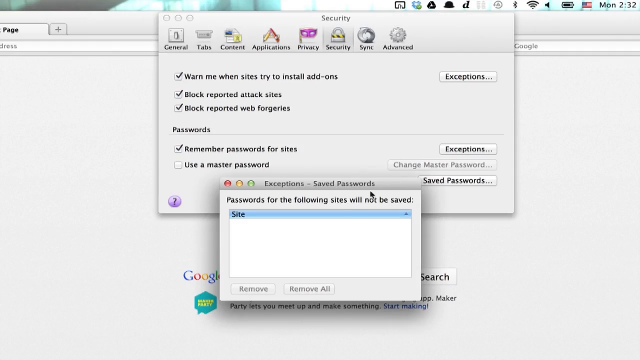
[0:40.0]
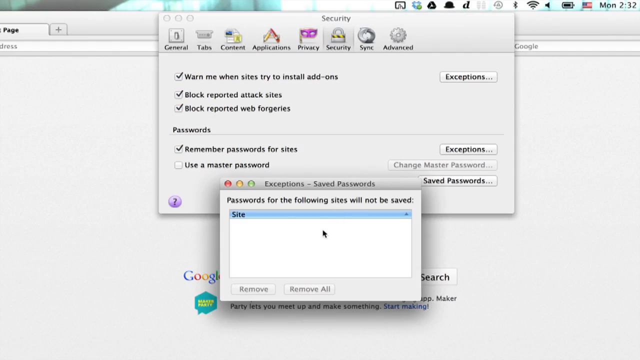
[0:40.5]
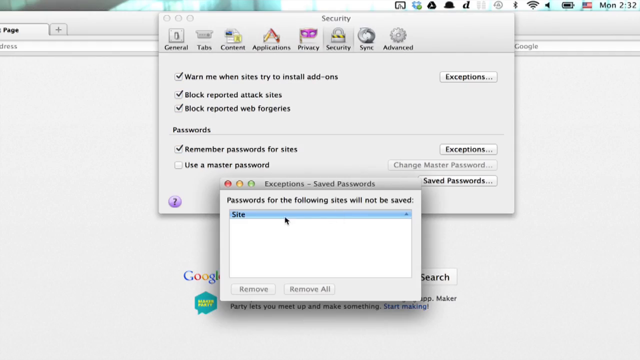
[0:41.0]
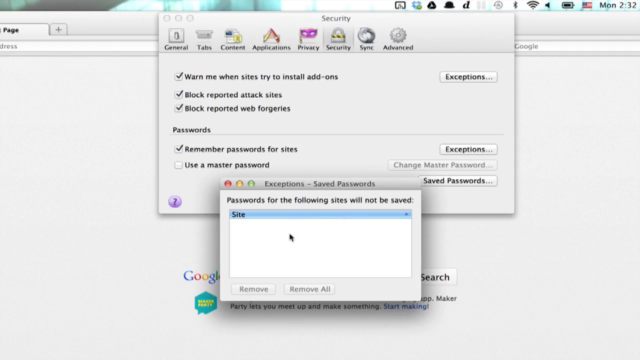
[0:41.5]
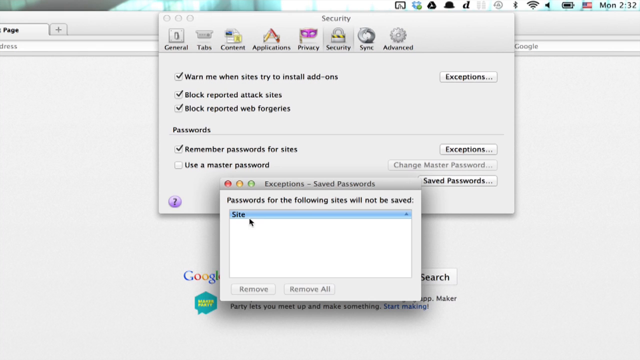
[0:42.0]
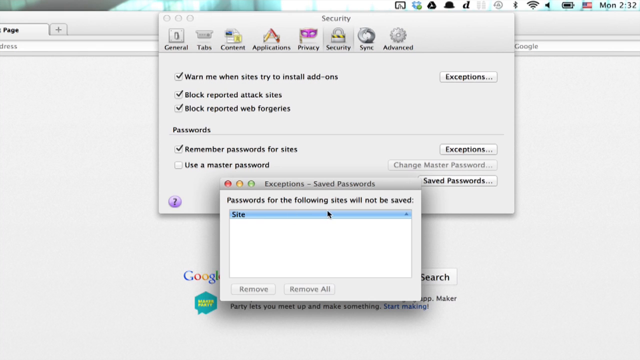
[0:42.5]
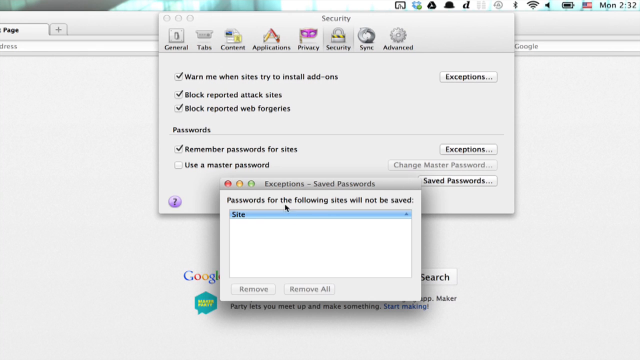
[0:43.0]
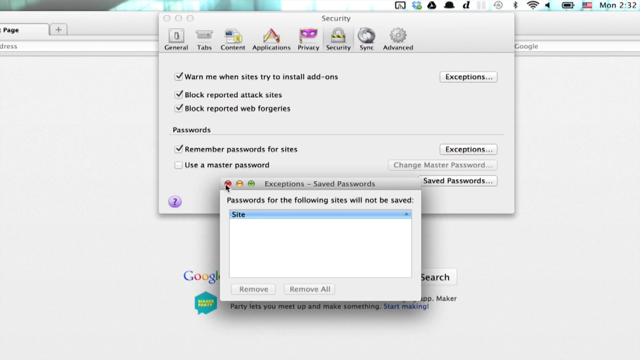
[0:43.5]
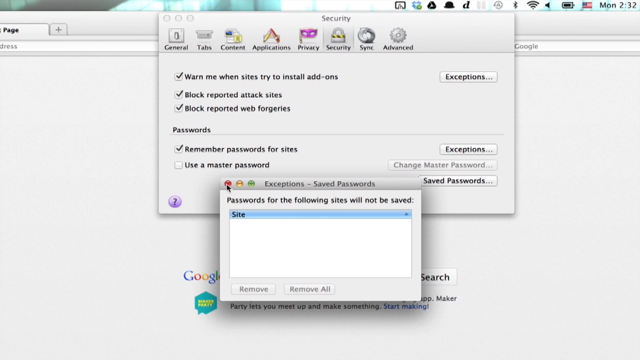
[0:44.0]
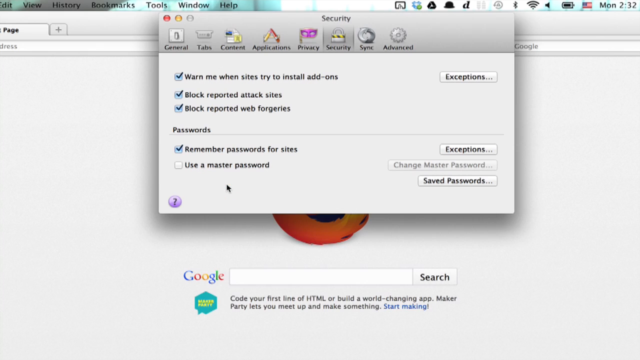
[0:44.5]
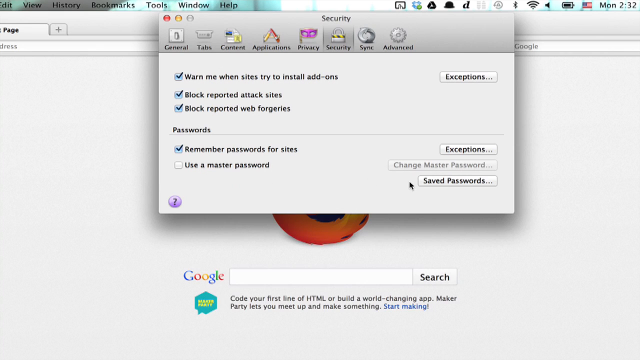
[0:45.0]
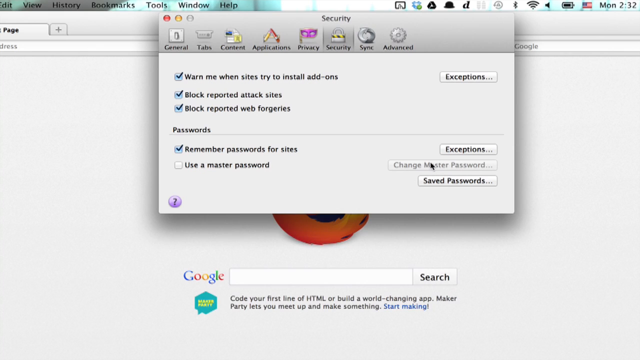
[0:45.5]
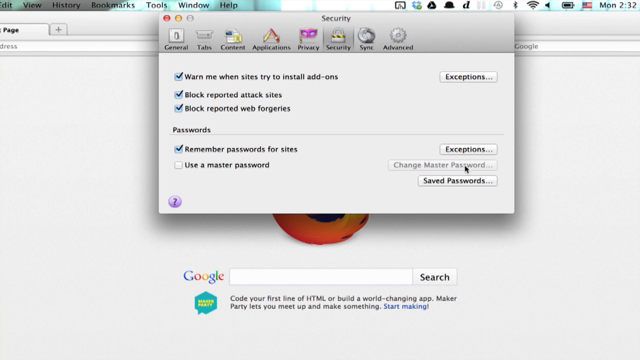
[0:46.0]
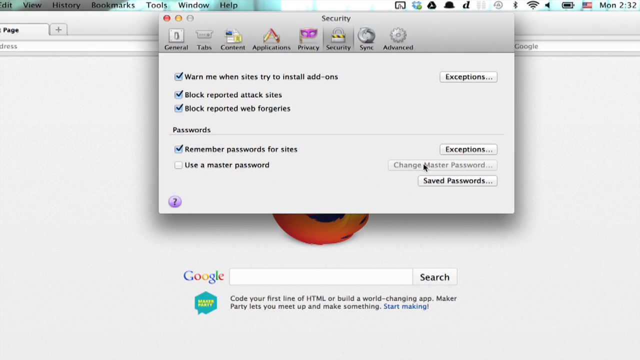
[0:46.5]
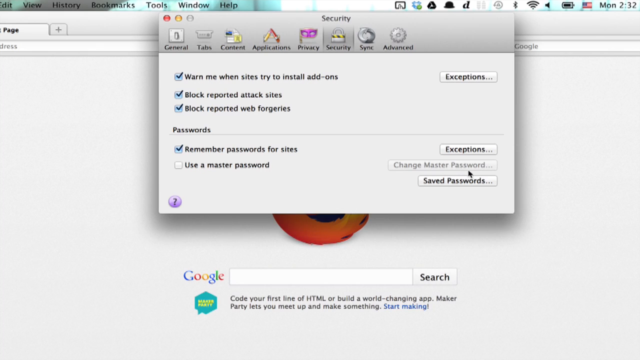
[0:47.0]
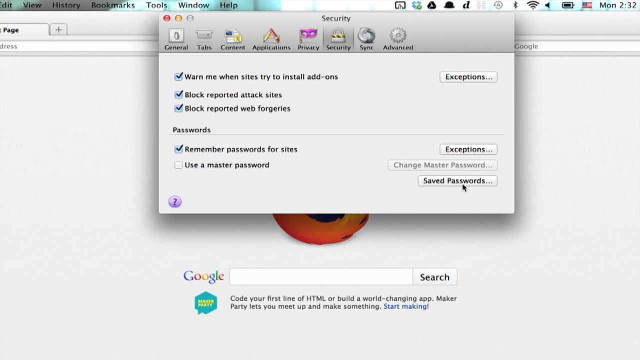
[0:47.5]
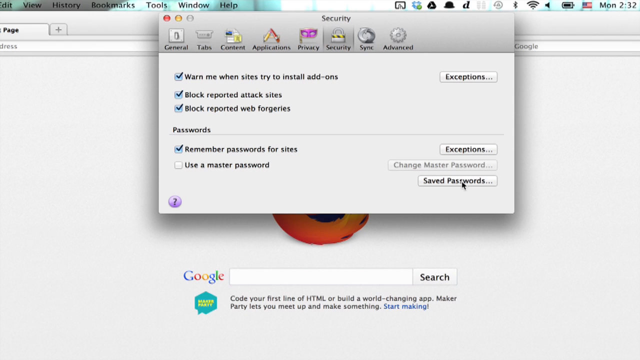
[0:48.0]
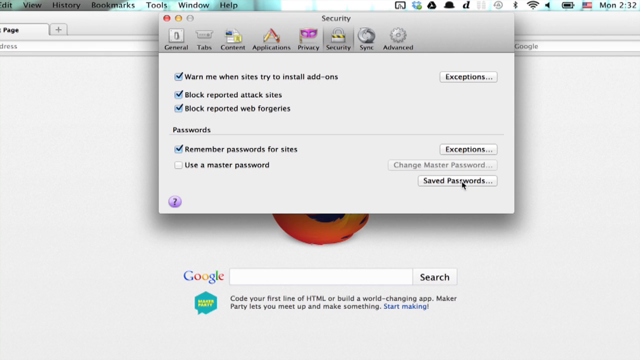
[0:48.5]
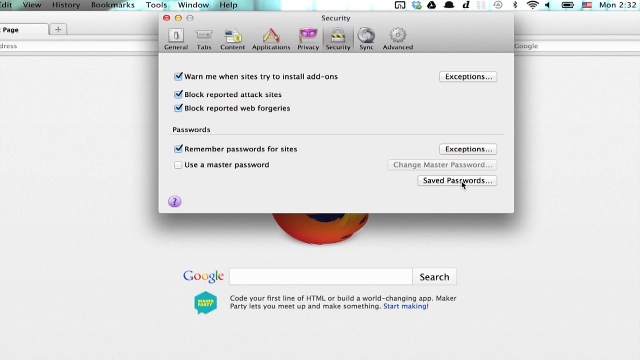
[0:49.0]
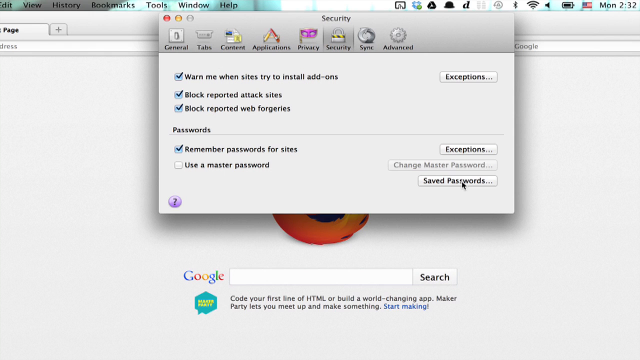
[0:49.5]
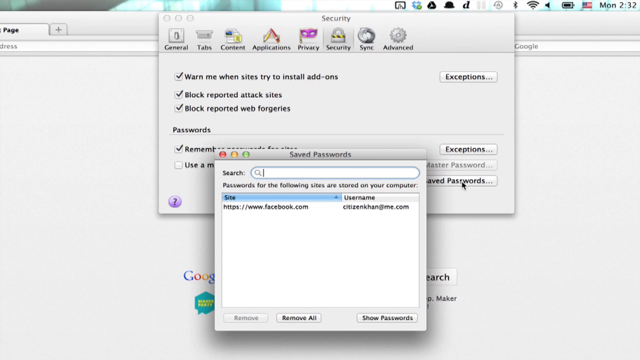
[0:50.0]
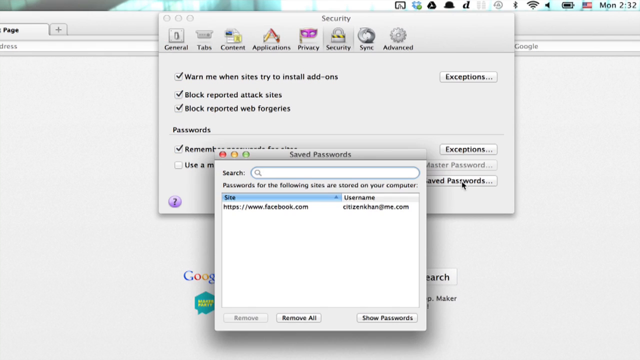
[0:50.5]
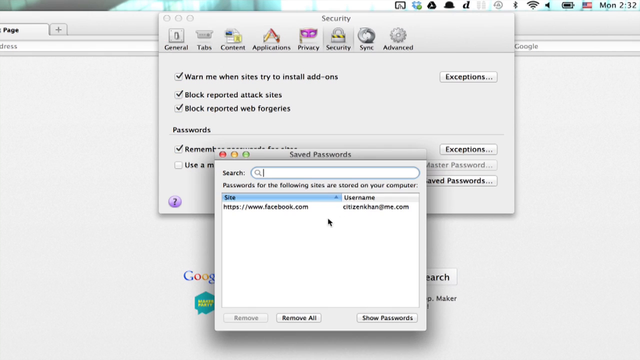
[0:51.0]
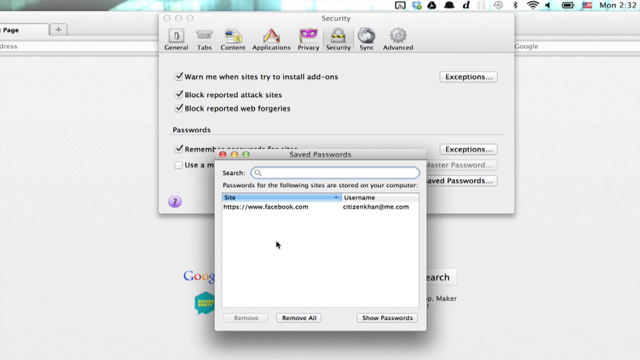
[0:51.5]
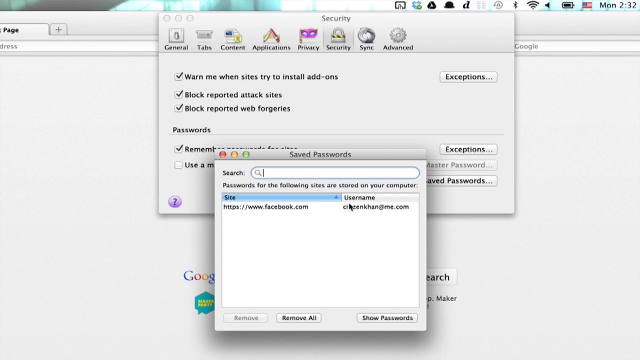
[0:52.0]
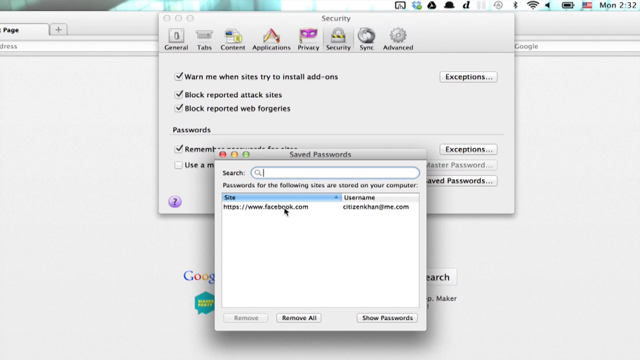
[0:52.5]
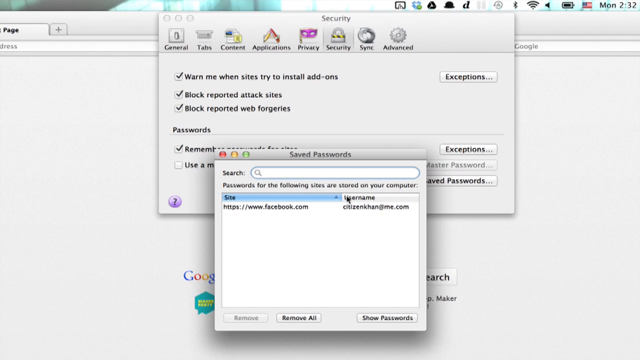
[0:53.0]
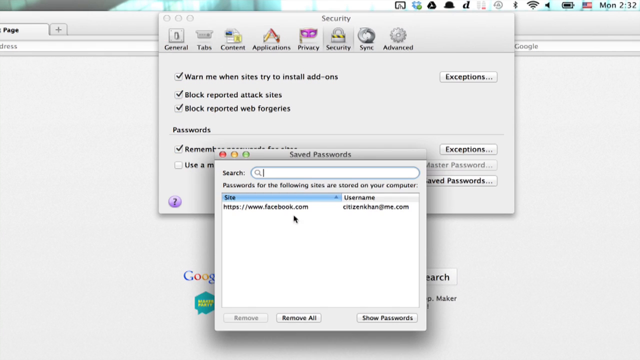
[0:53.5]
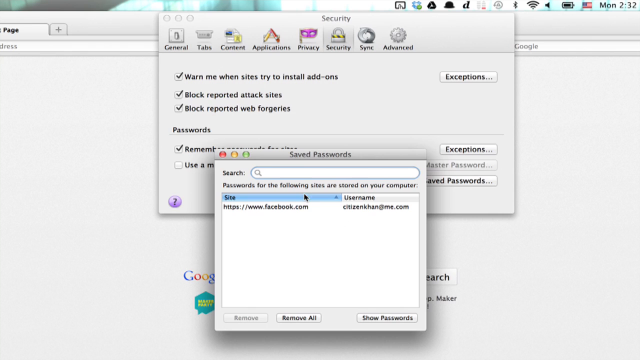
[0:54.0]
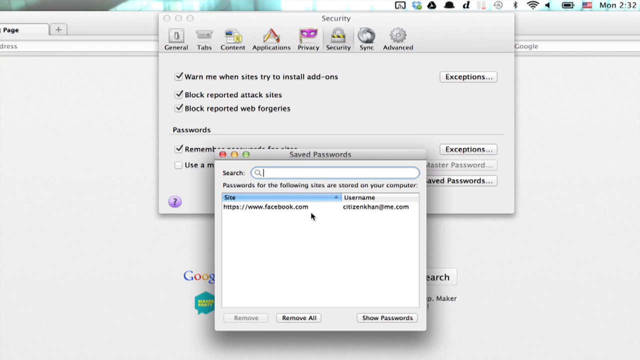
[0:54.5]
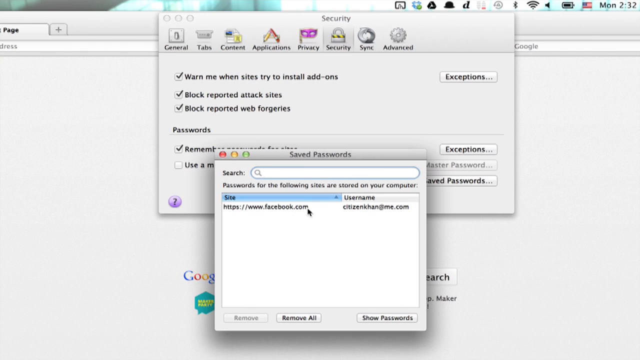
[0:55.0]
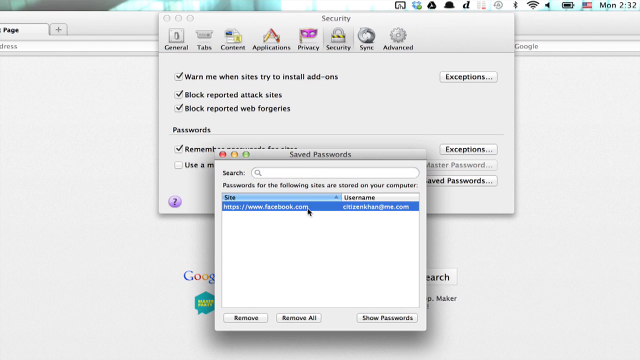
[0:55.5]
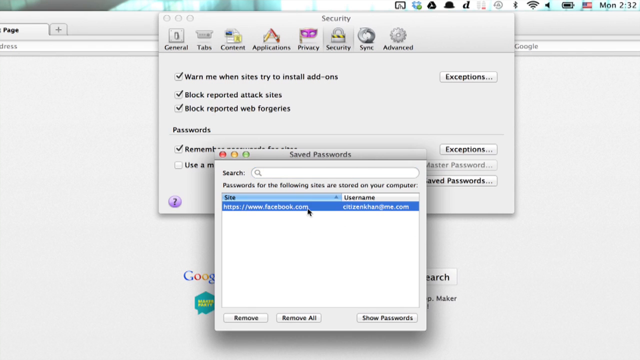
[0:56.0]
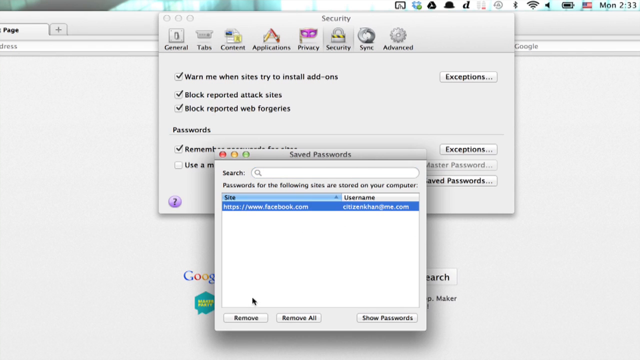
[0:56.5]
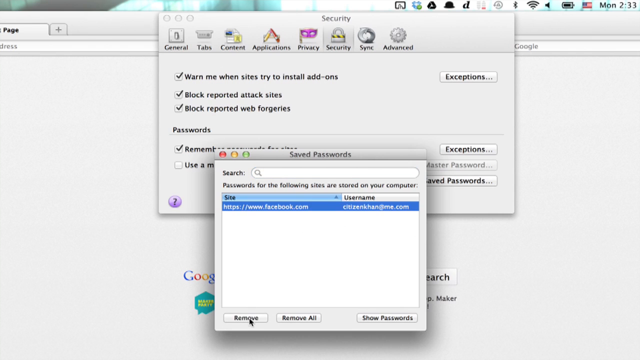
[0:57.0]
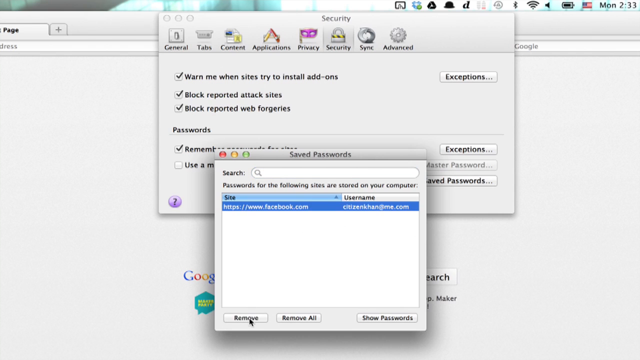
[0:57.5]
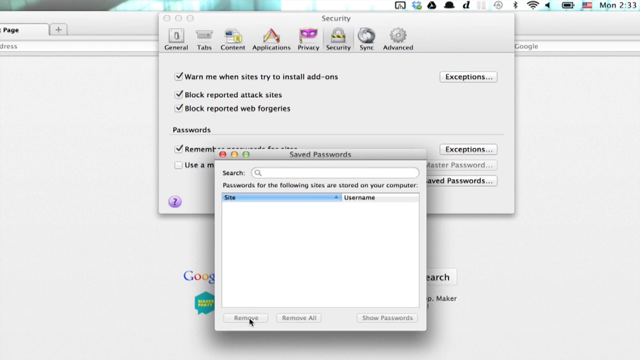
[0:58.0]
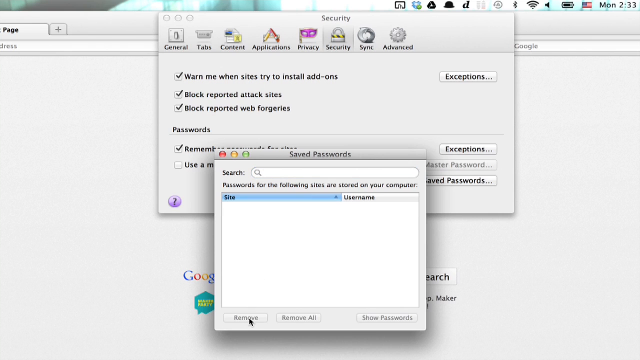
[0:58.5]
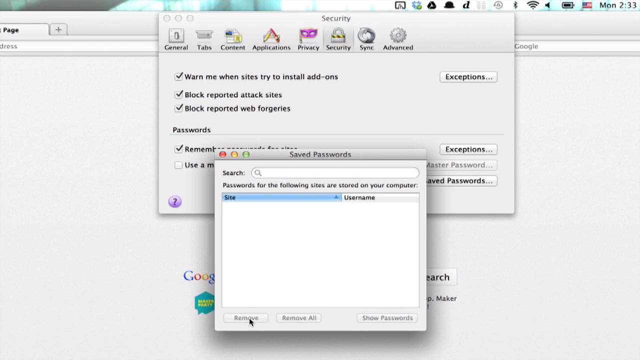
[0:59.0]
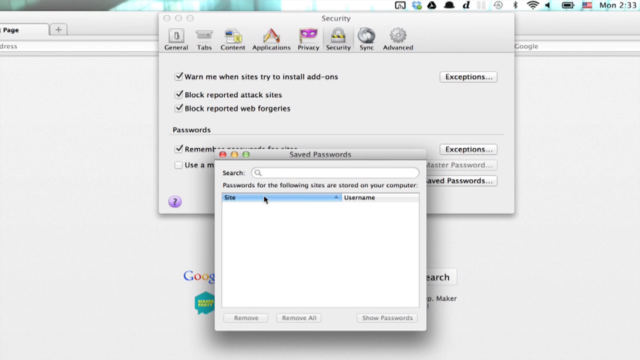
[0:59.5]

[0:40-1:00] The man shows how to find saved passwords through Google, in case a password has been forgotten, apparently showing how to access those passwords in case there was no autofill.